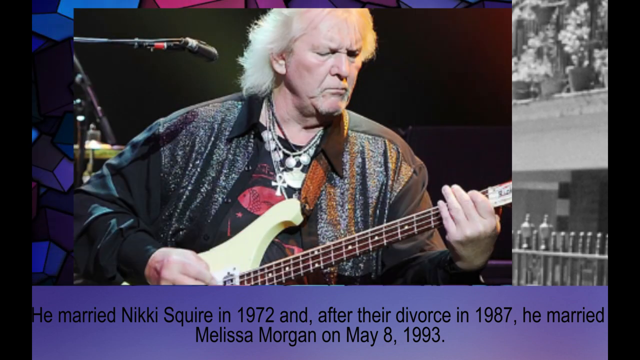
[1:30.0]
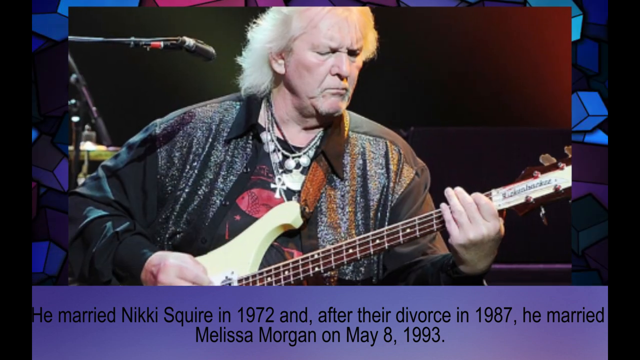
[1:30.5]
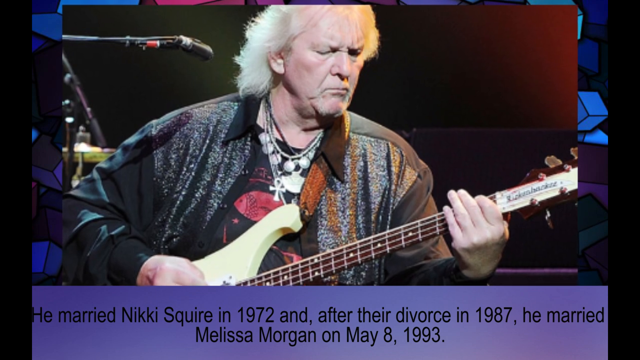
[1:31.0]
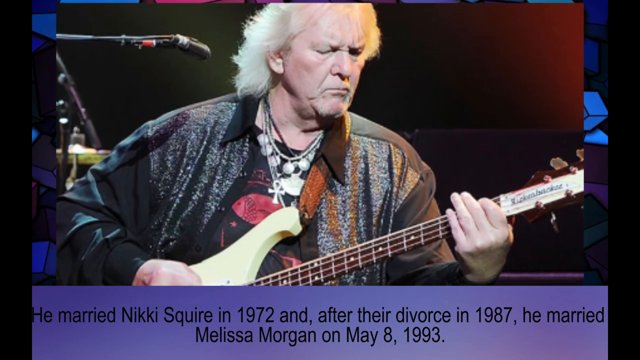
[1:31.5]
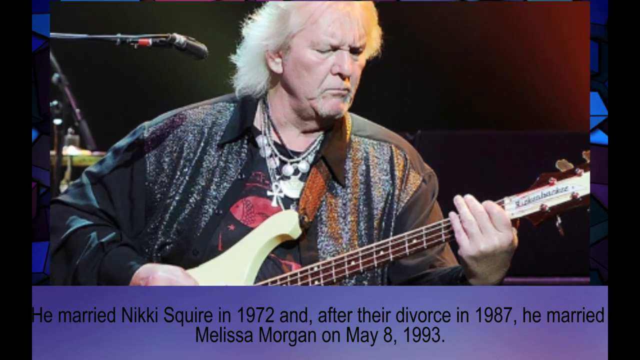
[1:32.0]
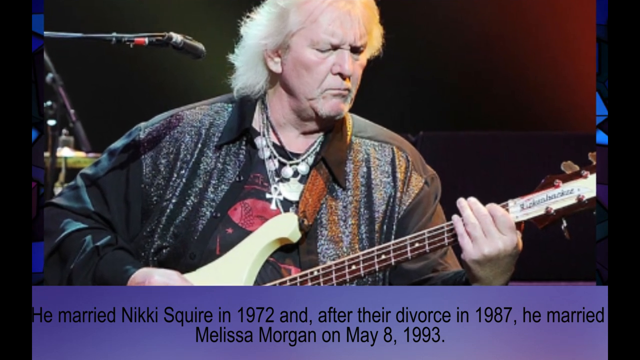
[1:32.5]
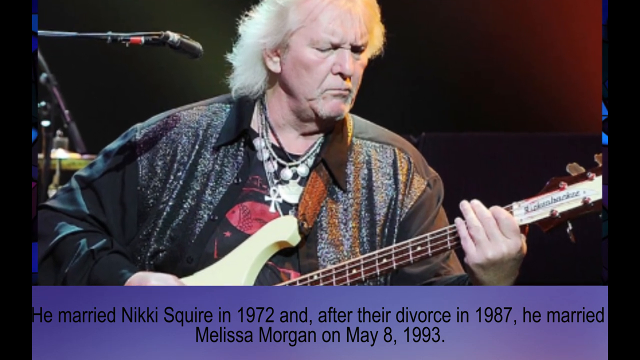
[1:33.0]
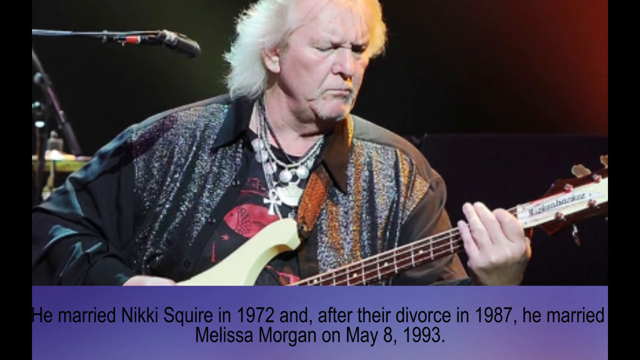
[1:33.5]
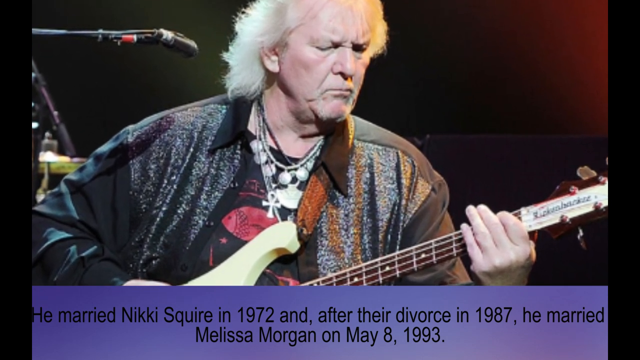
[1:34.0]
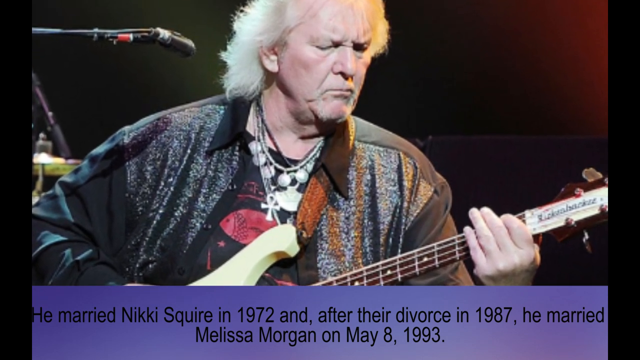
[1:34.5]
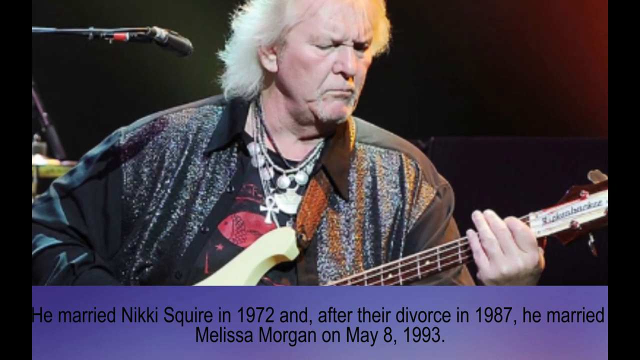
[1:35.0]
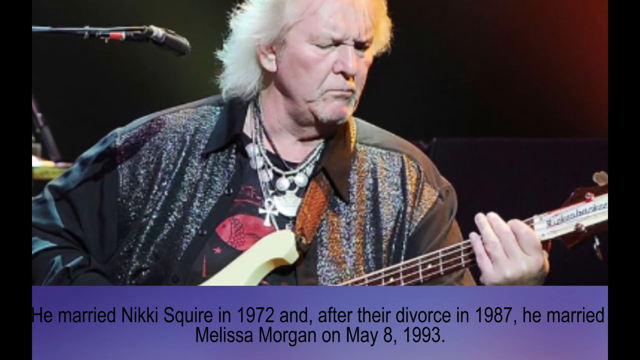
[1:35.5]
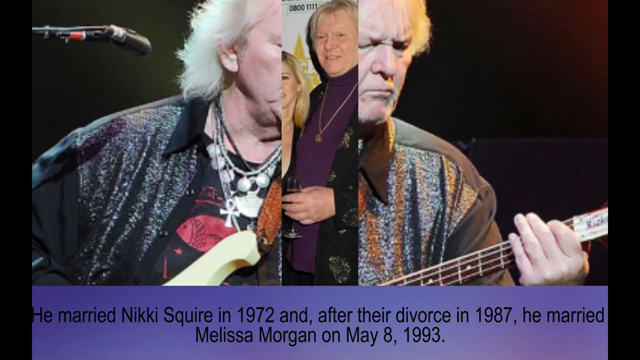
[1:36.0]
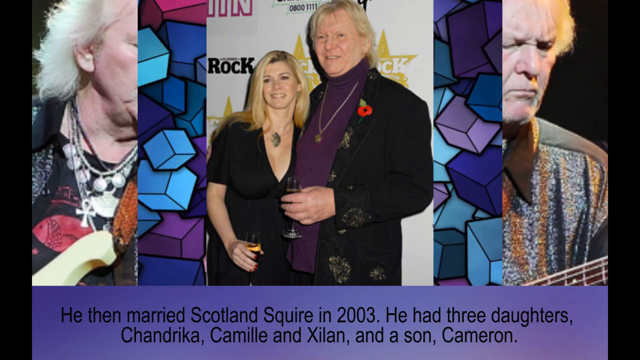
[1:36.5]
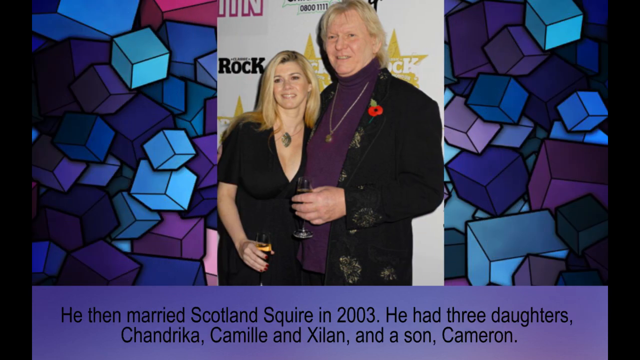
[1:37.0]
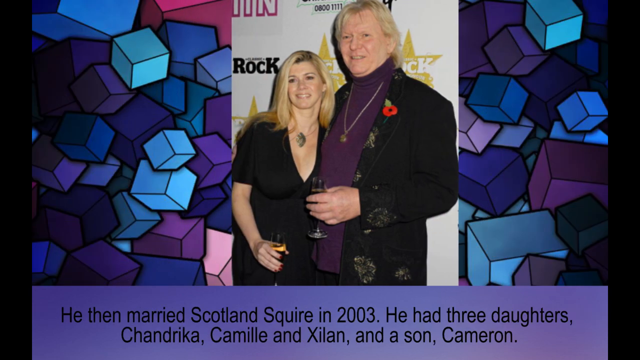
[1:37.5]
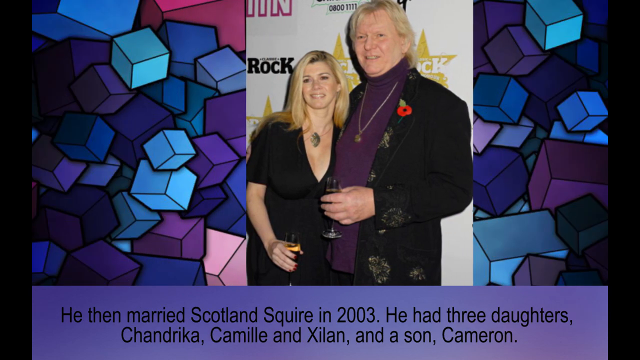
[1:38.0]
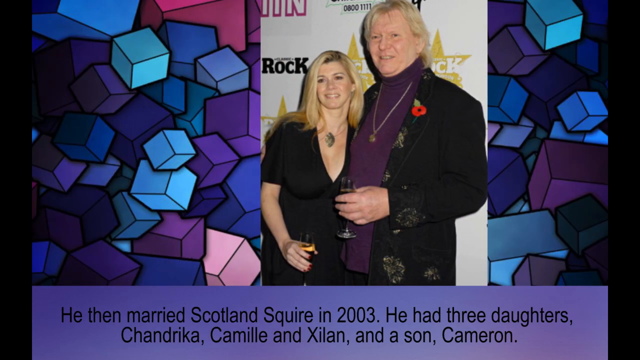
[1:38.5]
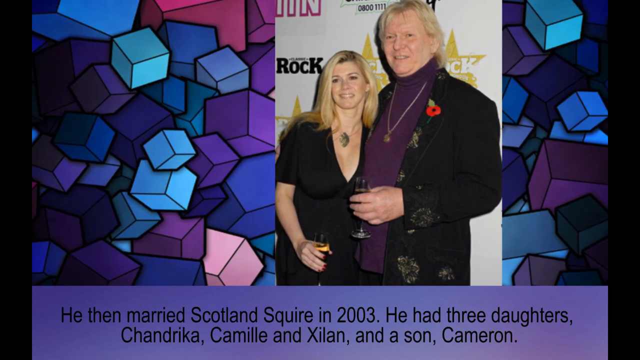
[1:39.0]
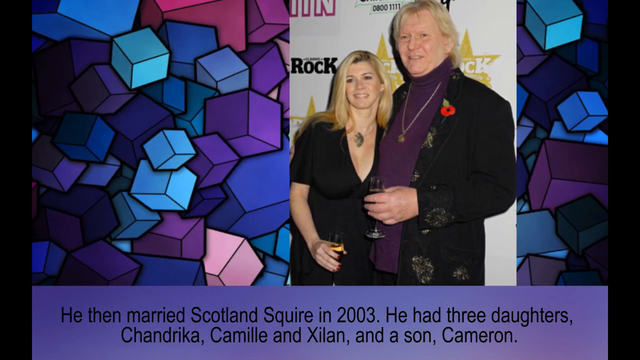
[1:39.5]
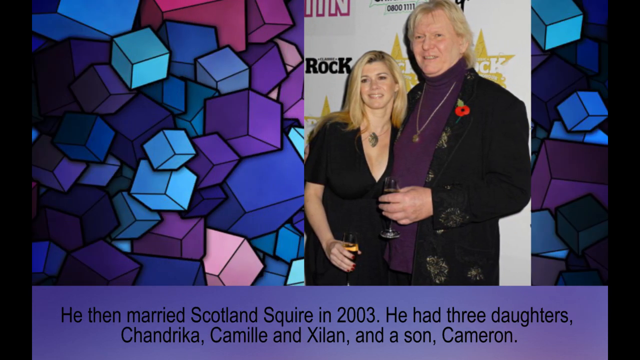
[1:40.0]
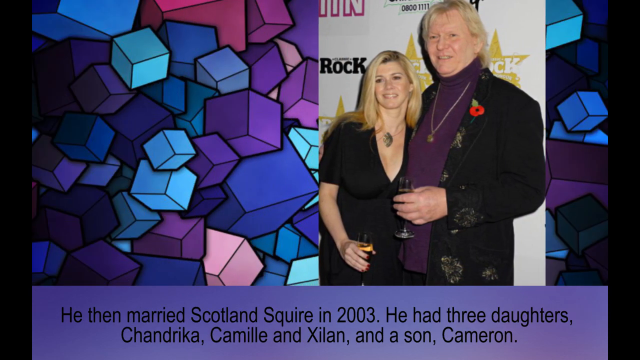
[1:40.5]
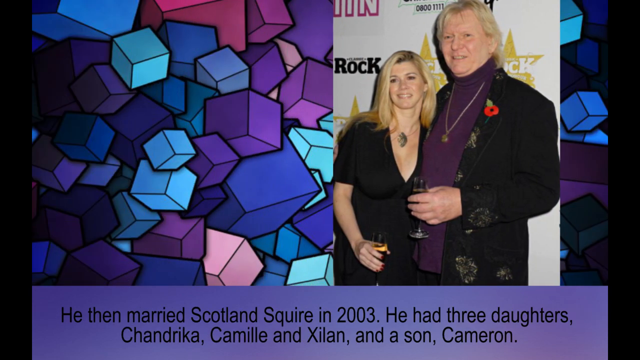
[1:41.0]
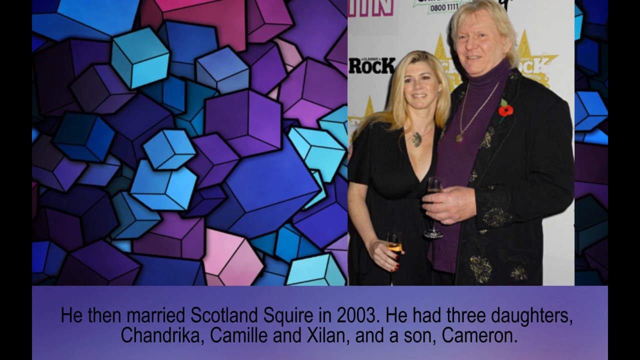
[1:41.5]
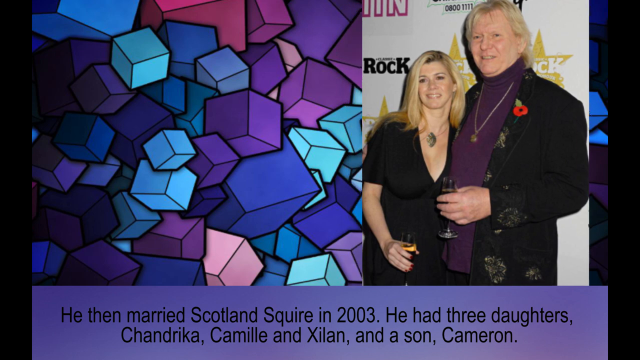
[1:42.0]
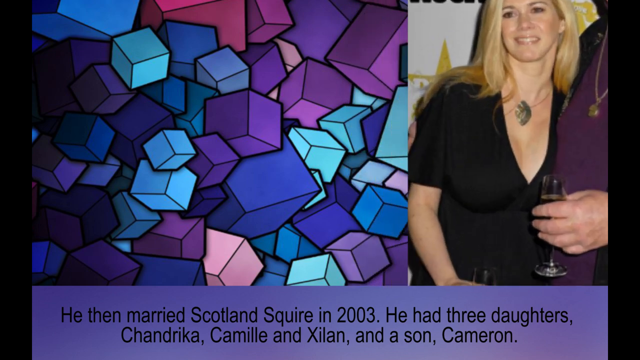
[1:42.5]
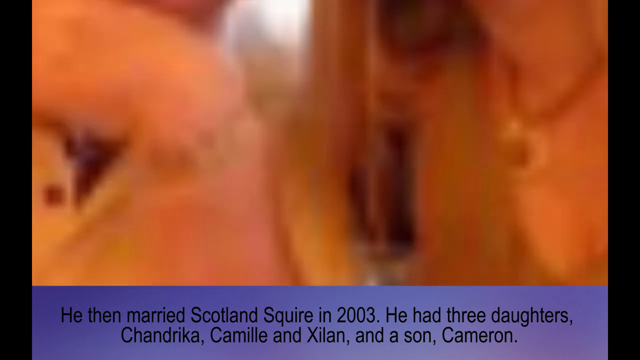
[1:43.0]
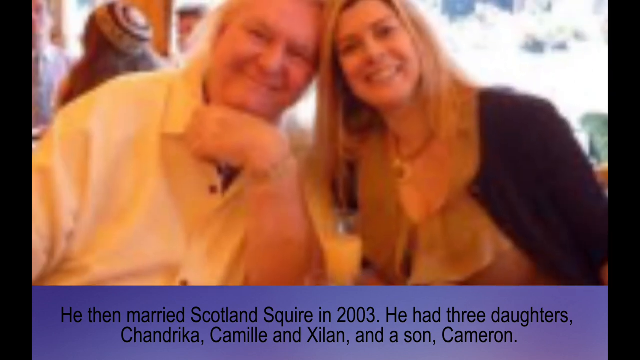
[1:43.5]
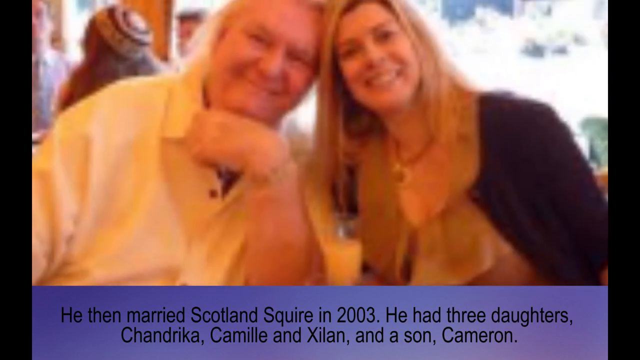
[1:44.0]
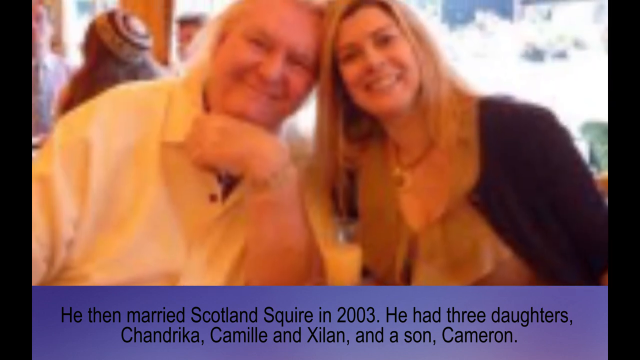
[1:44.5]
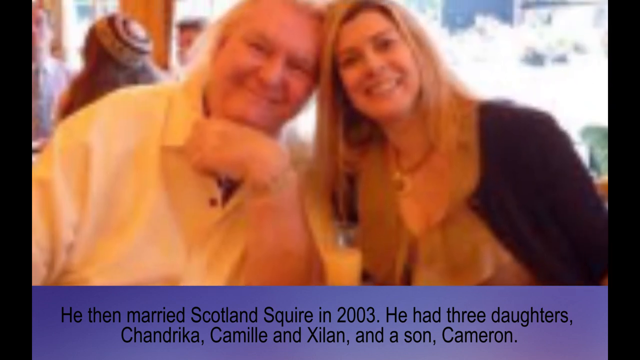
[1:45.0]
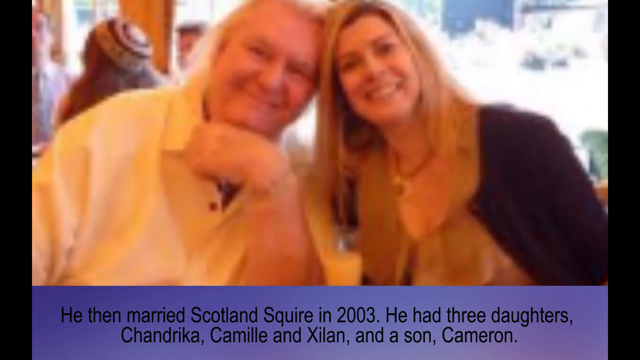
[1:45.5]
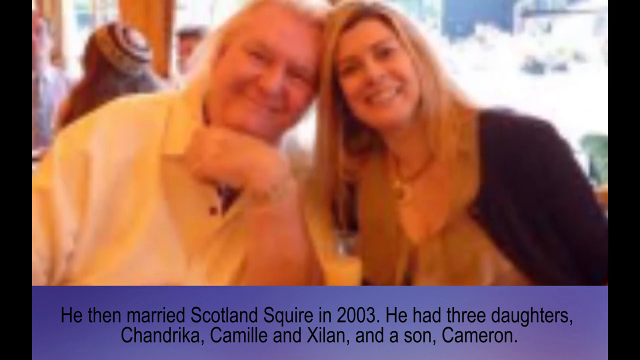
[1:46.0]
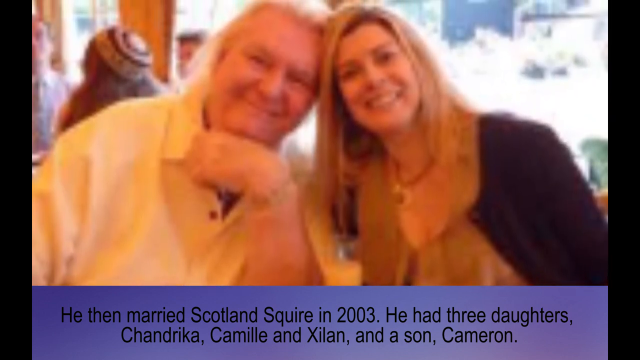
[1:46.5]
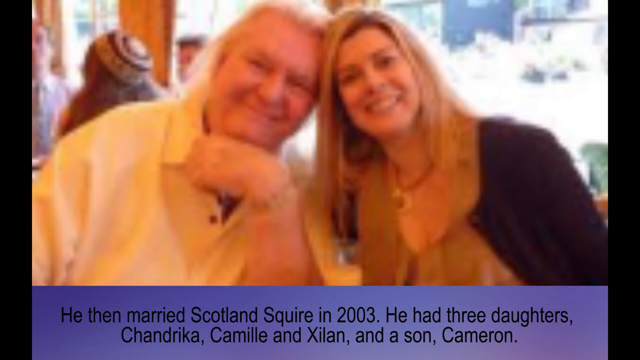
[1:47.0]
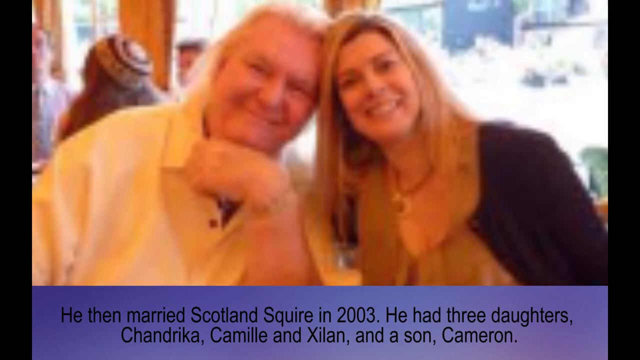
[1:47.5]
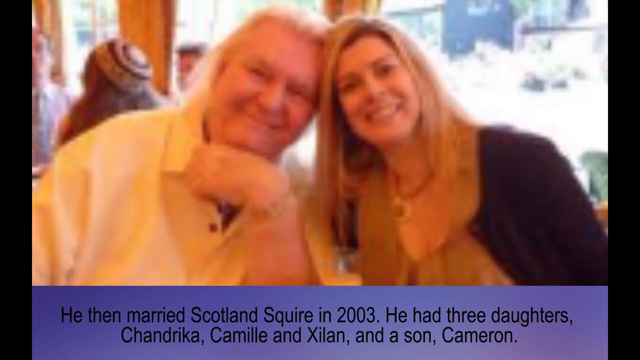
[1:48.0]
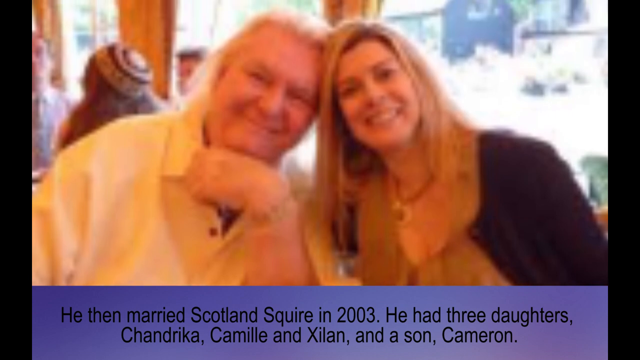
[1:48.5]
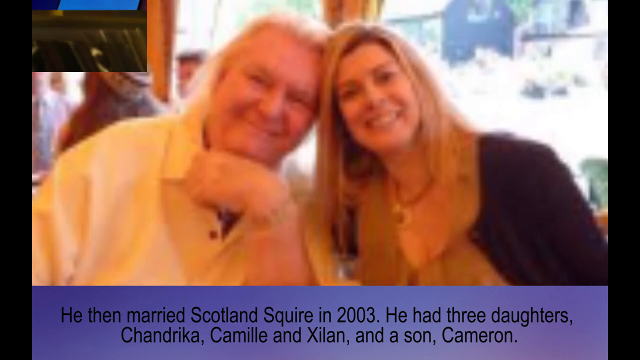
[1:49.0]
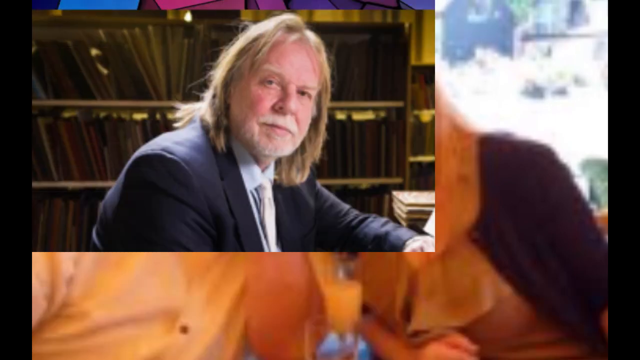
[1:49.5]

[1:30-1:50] A still image shows Chris Squire on a stage, holding and playing his guitar. Text at the bottom of the screen reads: "he married Nikki Squire in 1972, and after their divorce in 1987, he married Melissa Morgan on May 8, 1993." The next image shows him with, apparently, his new wife, and text reads: "he then married Scotland Squire in 2003. He had three daughters, Chandrika, Camille, and Xylan, and a son, Cameron." The ending image shows him sitting next to a piano with sheet music opened up in front of him, looking at the camera as his picture is taken.